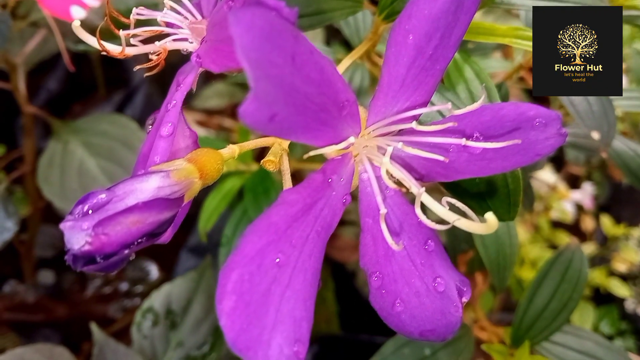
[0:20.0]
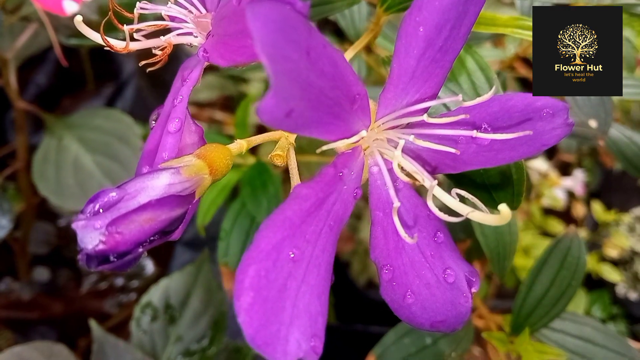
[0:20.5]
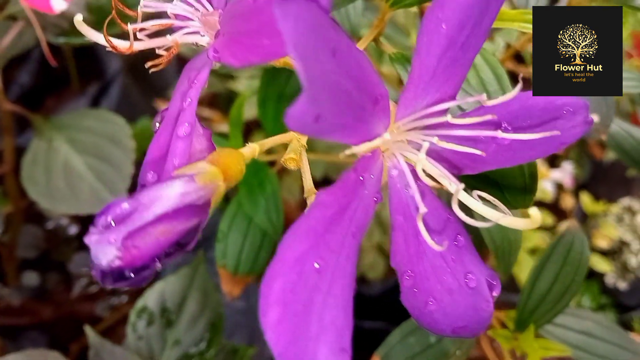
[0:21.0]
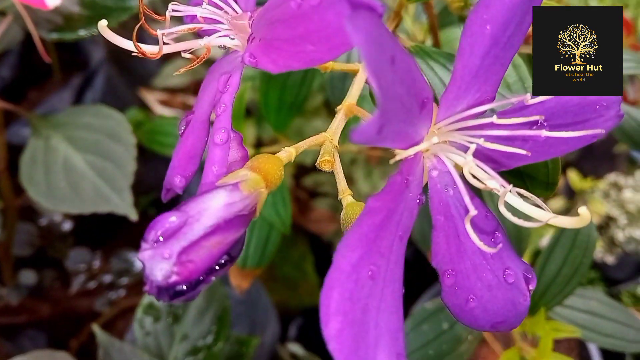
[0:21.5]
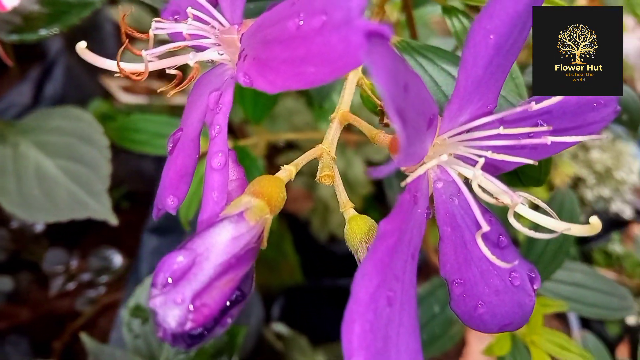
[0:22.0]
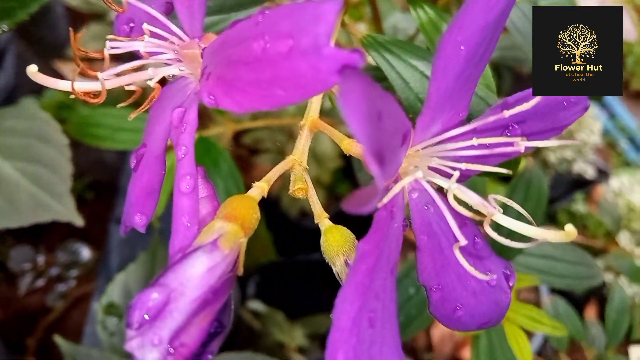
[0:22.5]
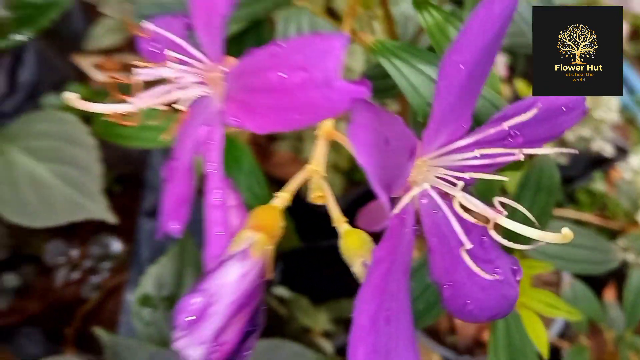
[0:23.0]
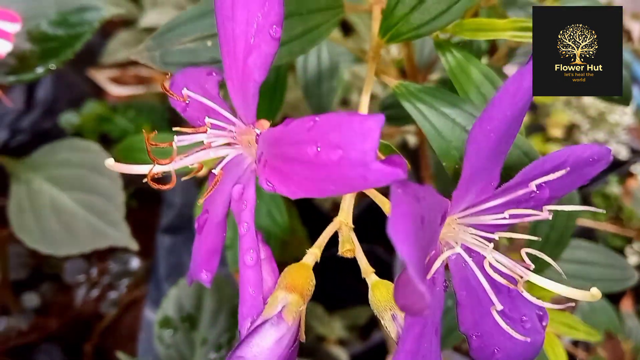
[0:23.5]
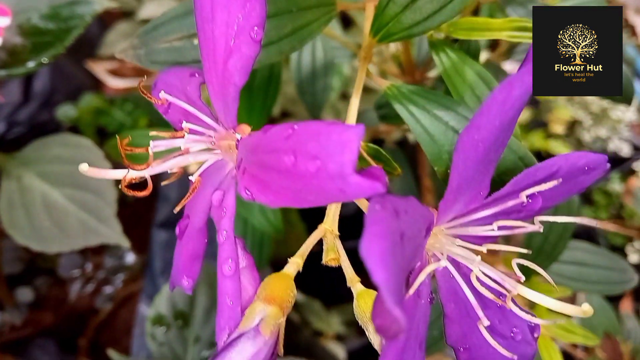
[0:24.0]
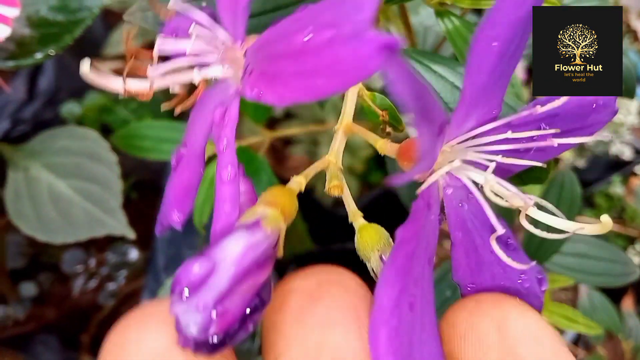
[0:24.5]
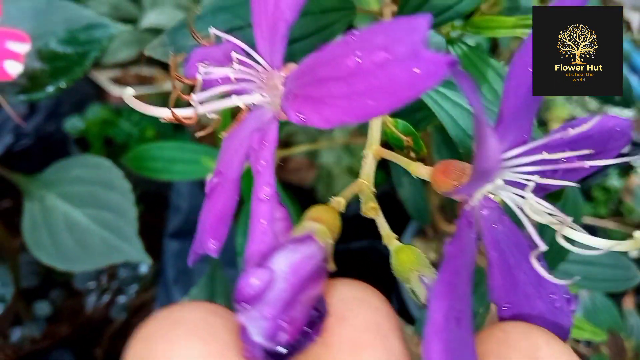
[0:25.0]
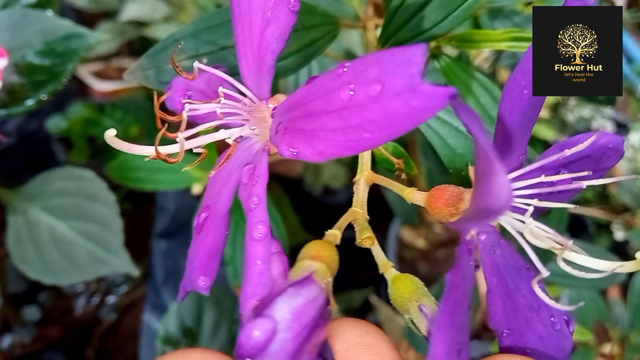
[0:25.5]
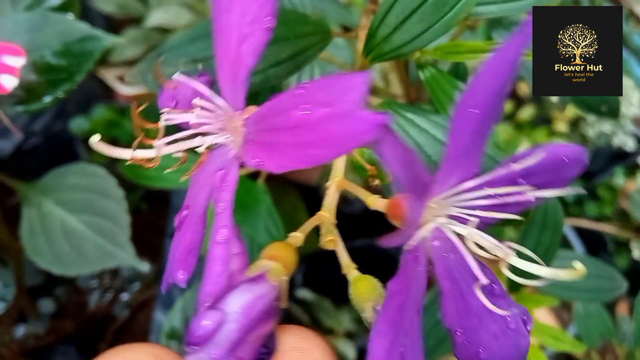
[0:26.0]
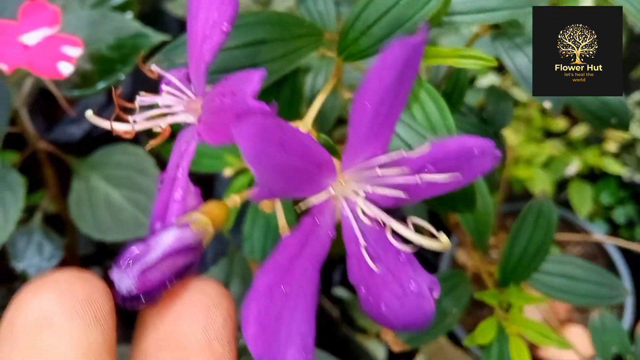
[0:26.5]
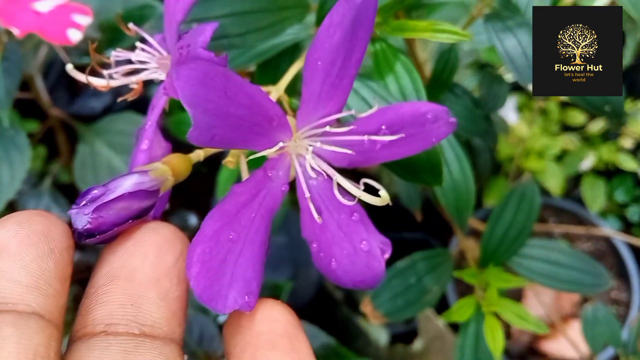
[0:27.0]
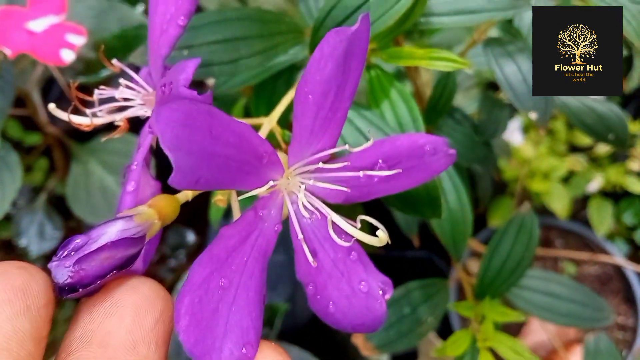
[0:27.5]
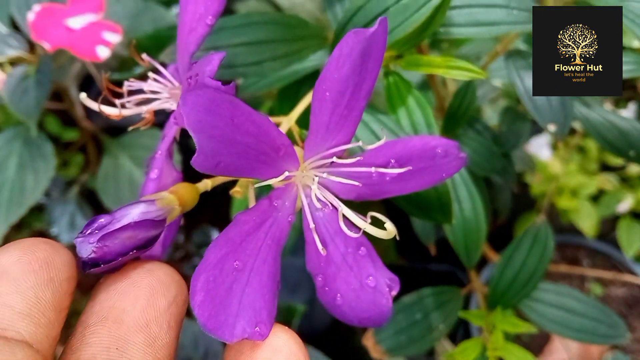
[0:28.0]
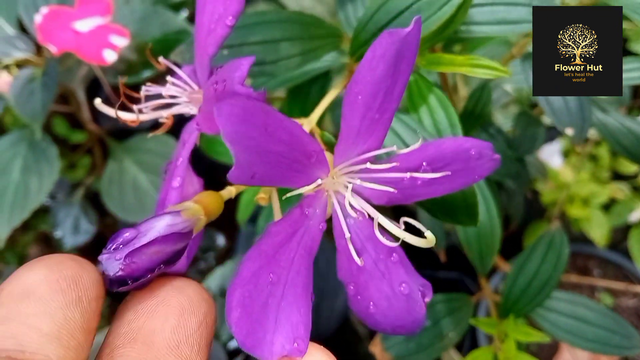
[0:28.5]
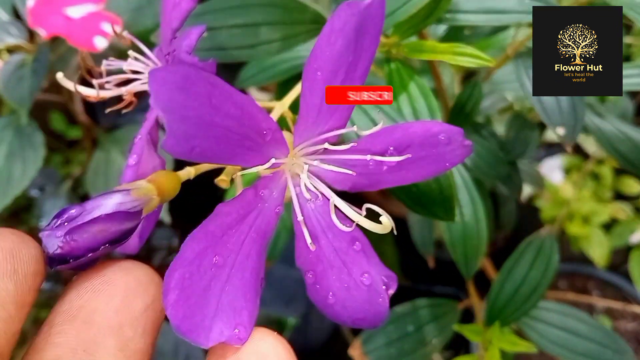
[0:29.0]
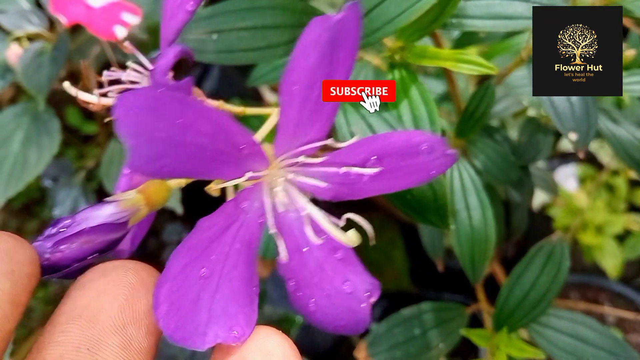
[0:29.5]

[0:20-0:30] A human hand with pale skin gently caresses the flower; whether it belongs to a man or a woman cannot be determined. A flower that has emerged but not yet bloomed is visible: its petals have not expanded, but it is fully purple rather than one of the tiny little buds that appear on some parts of the plant. The stems of the plant are slightly tan. The extrusions coming out from the center of the flower have some yellow colorations and are apparently pistils.